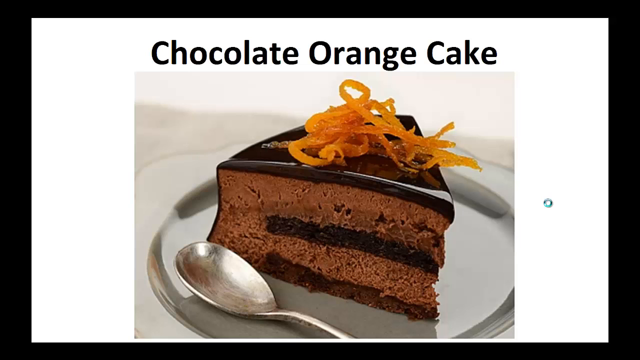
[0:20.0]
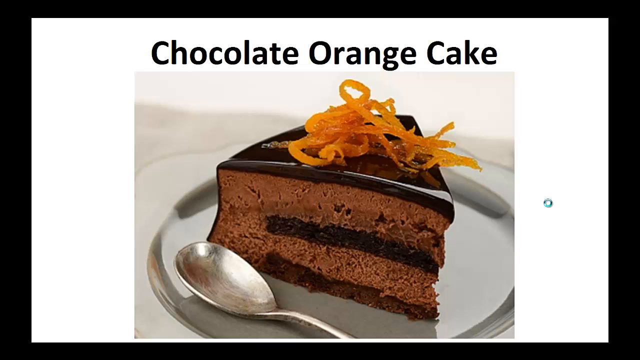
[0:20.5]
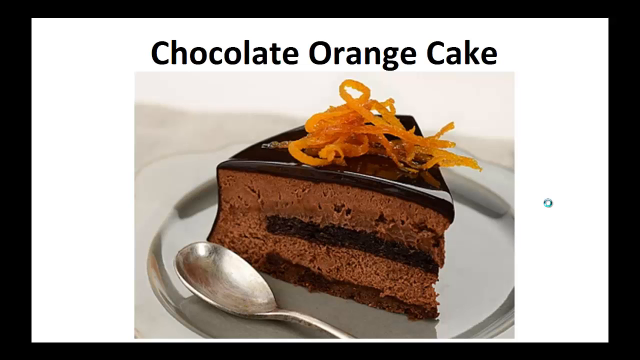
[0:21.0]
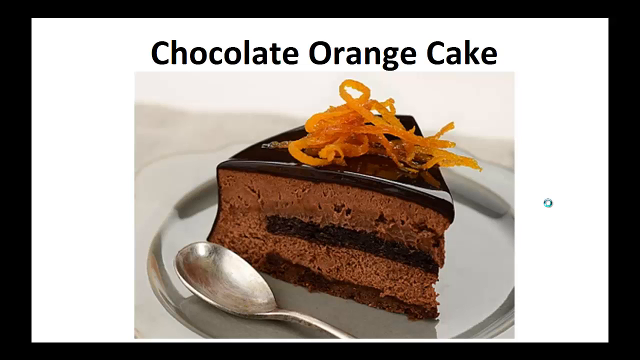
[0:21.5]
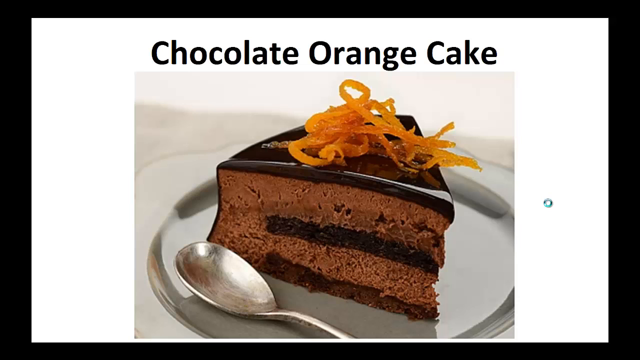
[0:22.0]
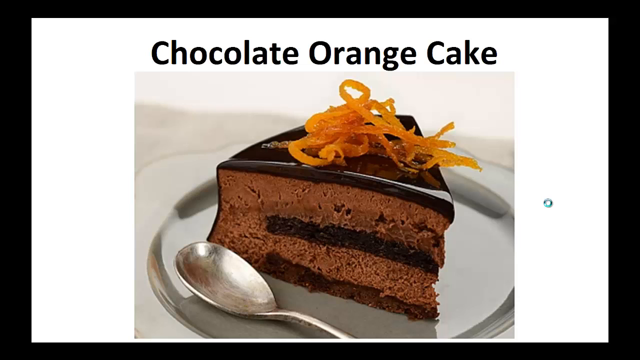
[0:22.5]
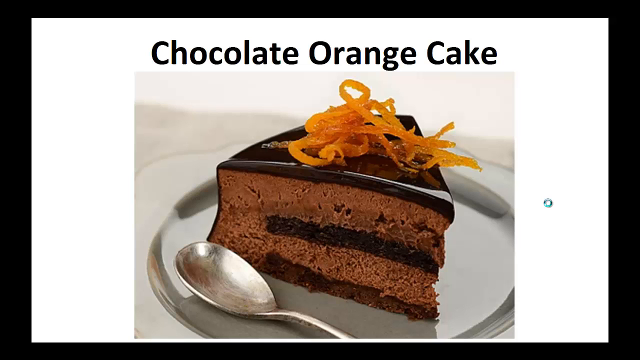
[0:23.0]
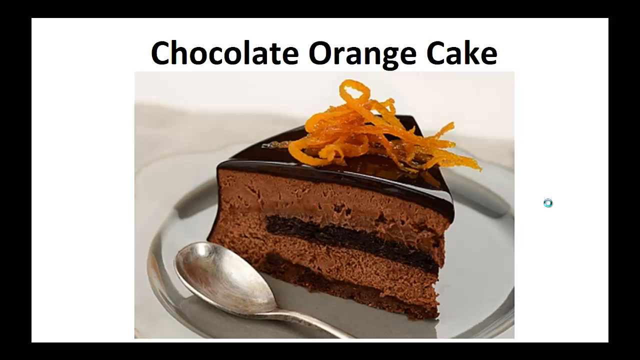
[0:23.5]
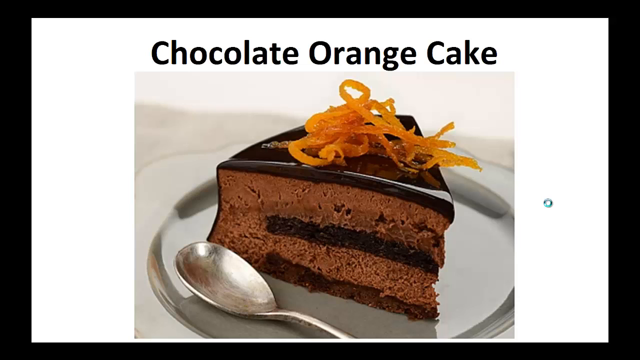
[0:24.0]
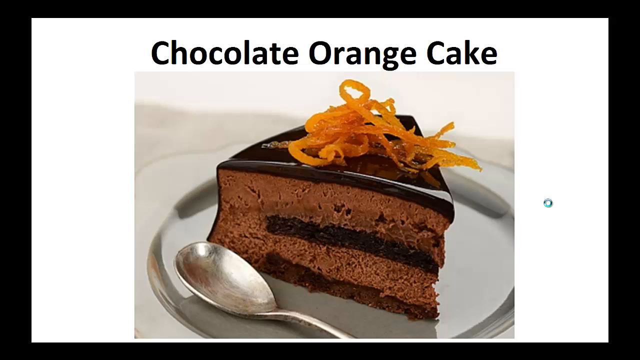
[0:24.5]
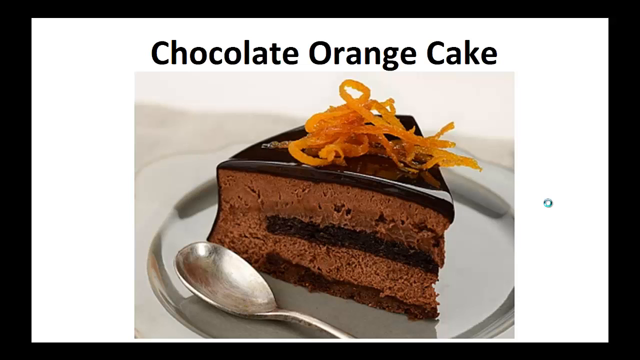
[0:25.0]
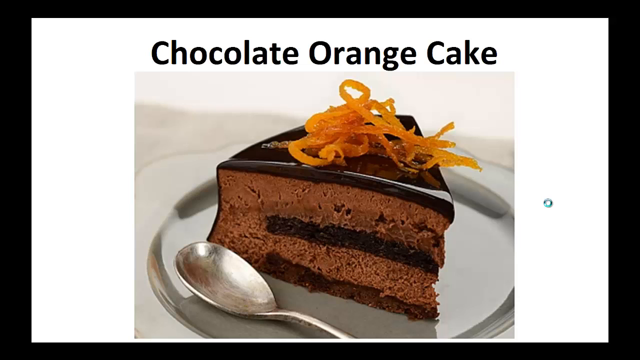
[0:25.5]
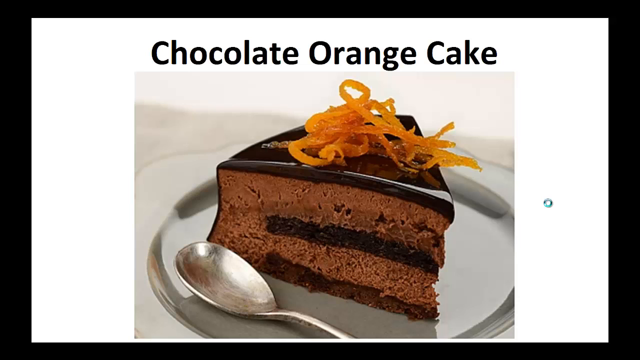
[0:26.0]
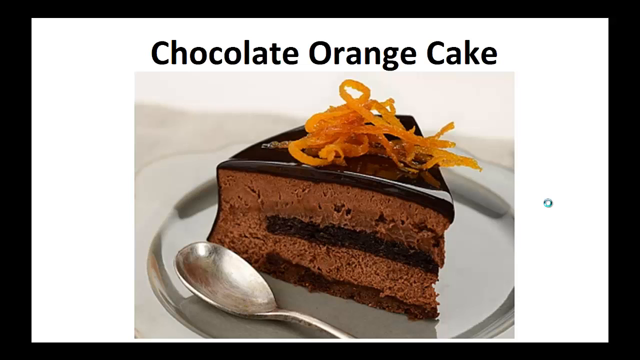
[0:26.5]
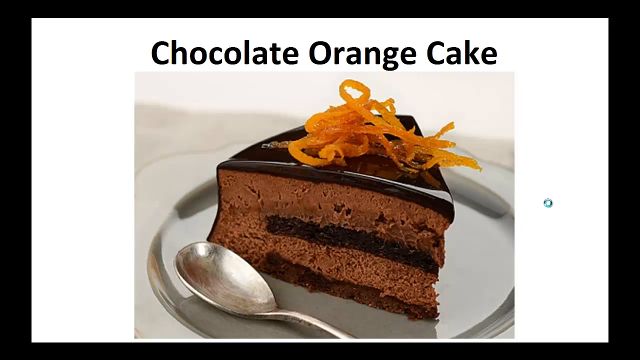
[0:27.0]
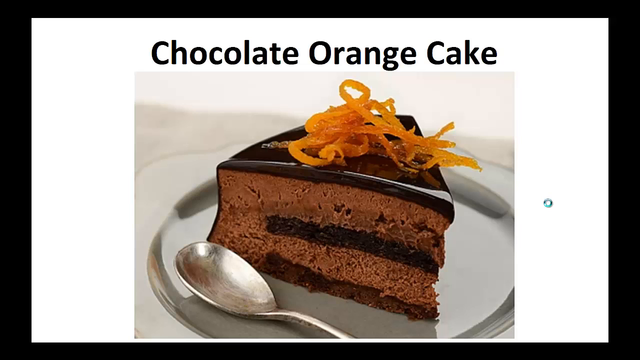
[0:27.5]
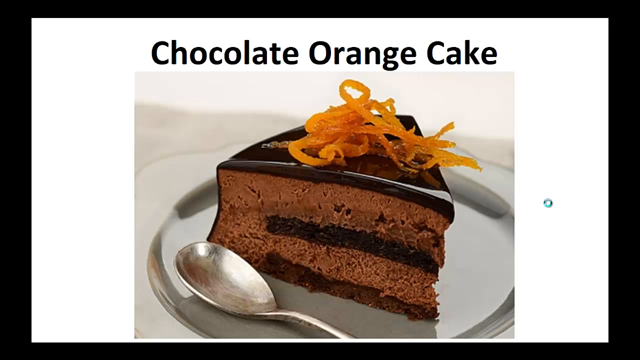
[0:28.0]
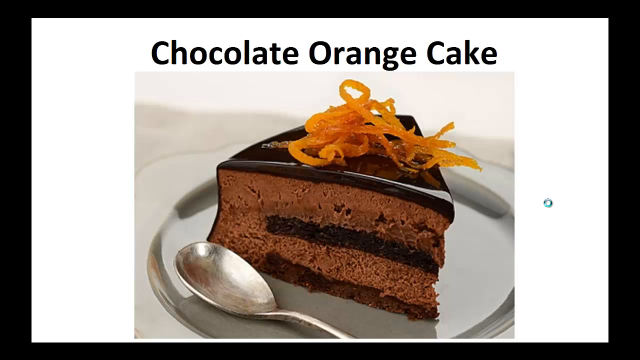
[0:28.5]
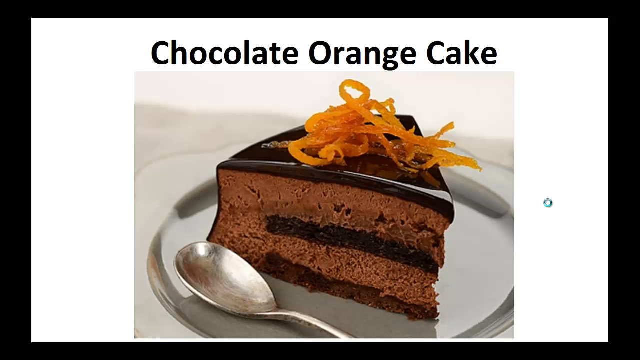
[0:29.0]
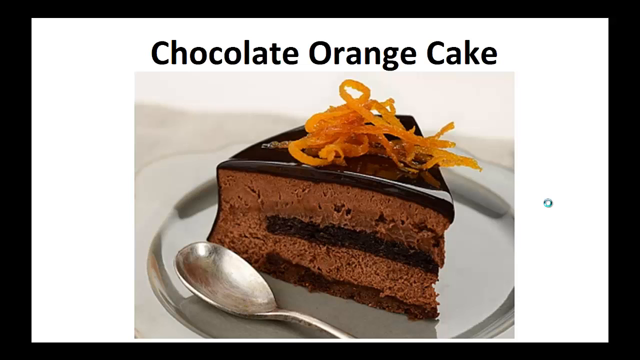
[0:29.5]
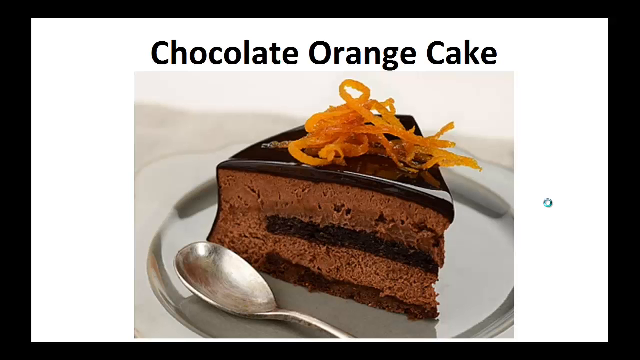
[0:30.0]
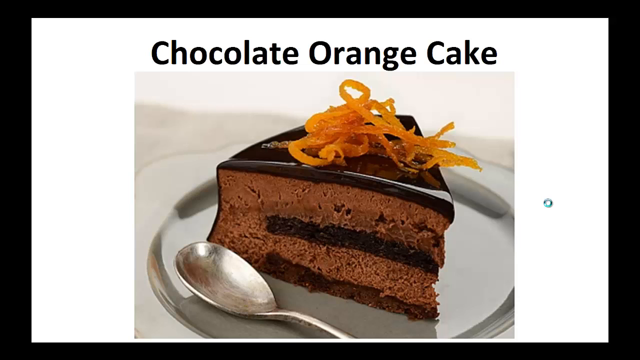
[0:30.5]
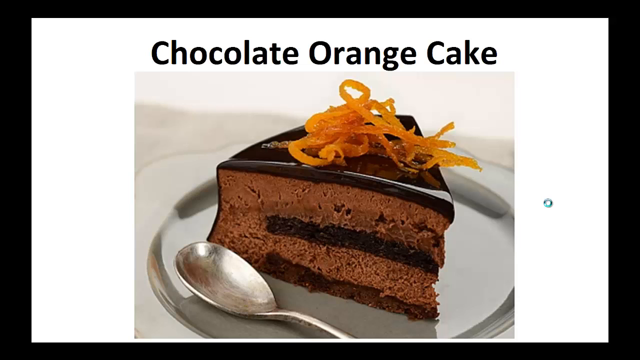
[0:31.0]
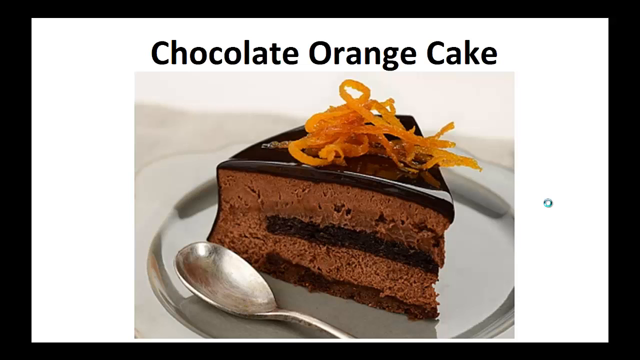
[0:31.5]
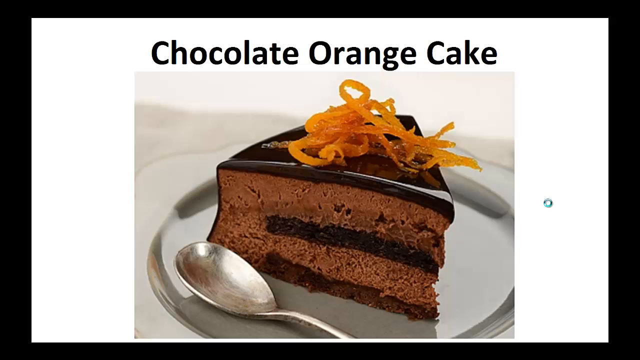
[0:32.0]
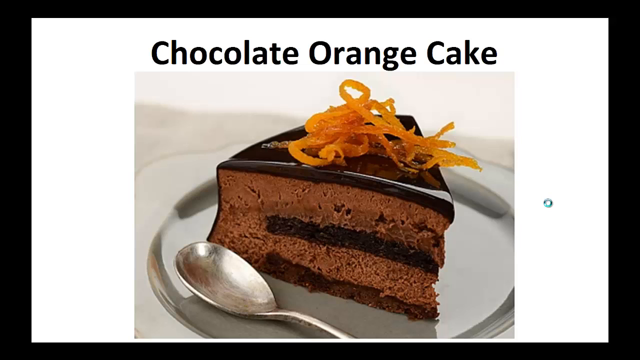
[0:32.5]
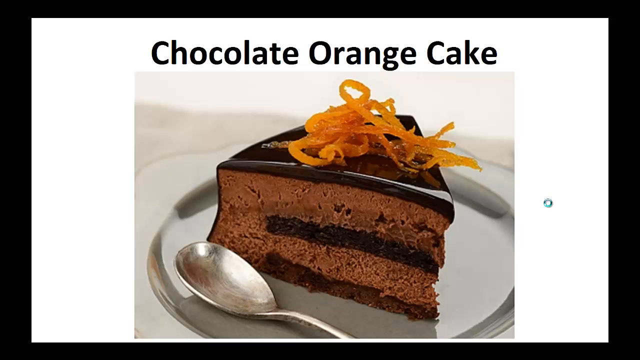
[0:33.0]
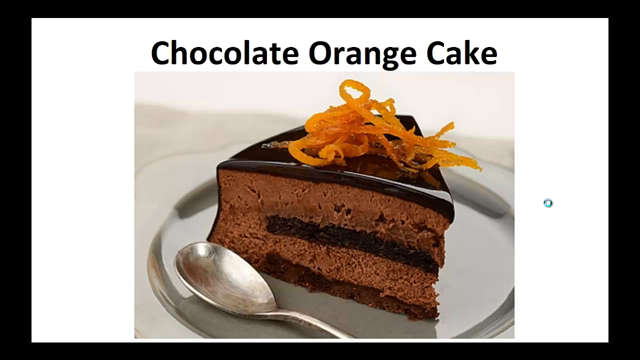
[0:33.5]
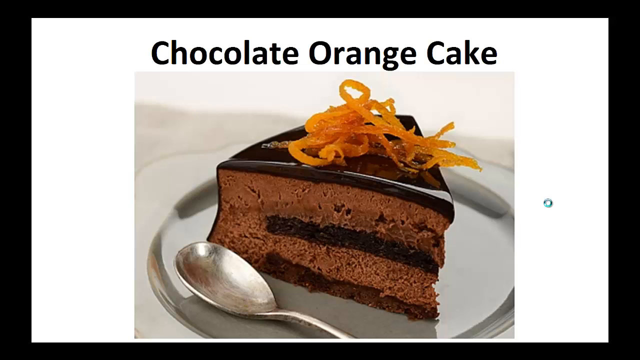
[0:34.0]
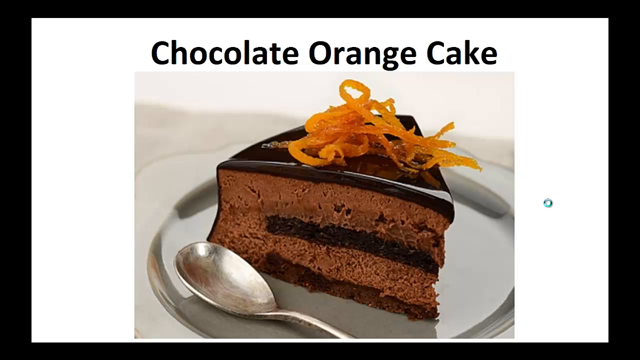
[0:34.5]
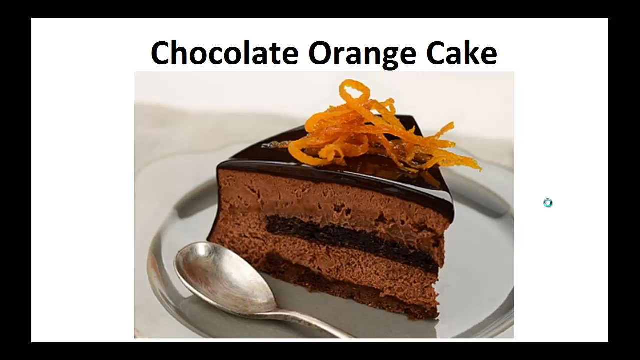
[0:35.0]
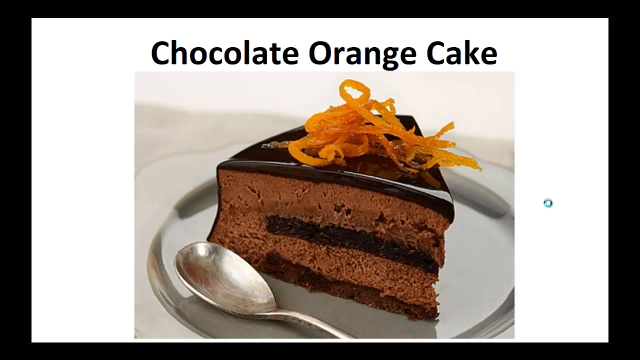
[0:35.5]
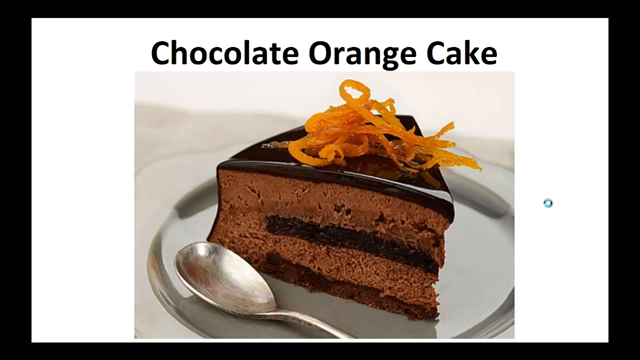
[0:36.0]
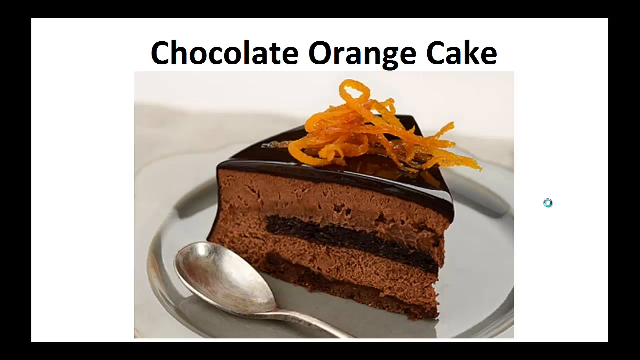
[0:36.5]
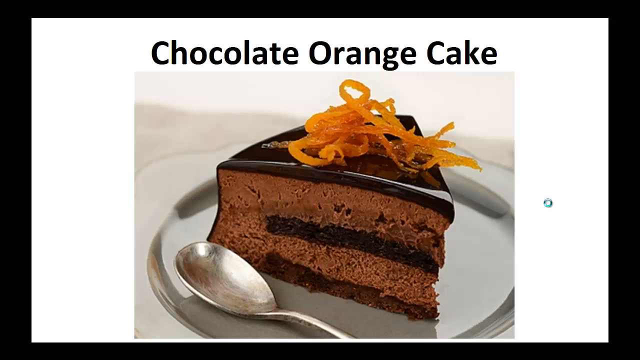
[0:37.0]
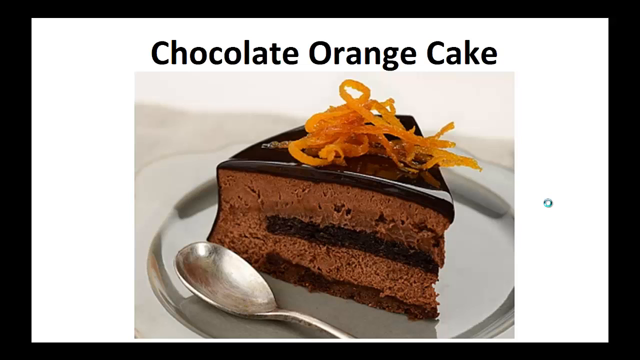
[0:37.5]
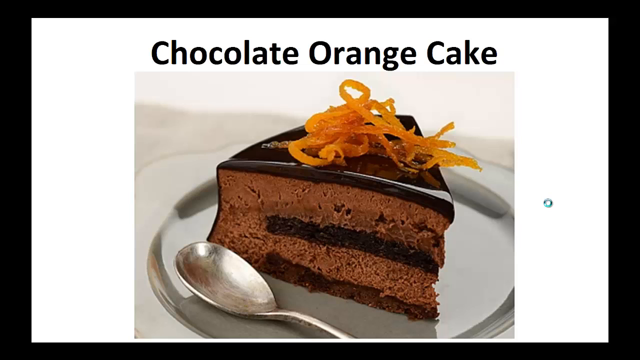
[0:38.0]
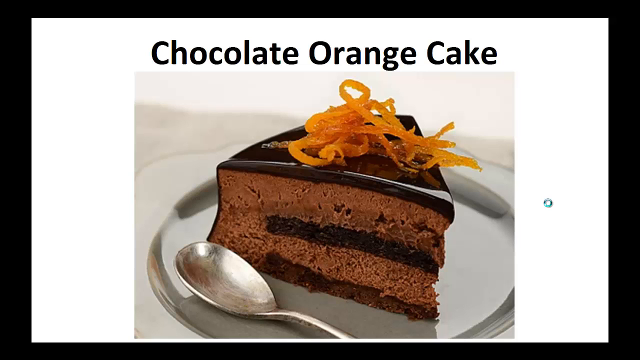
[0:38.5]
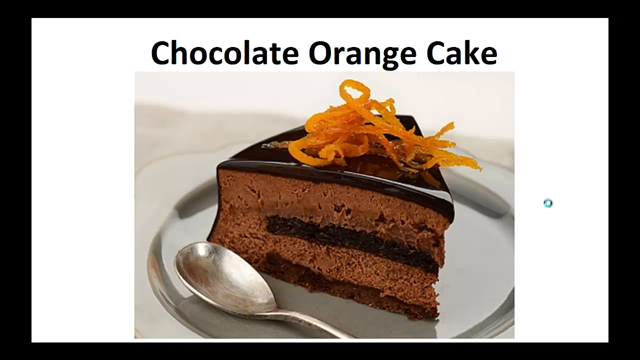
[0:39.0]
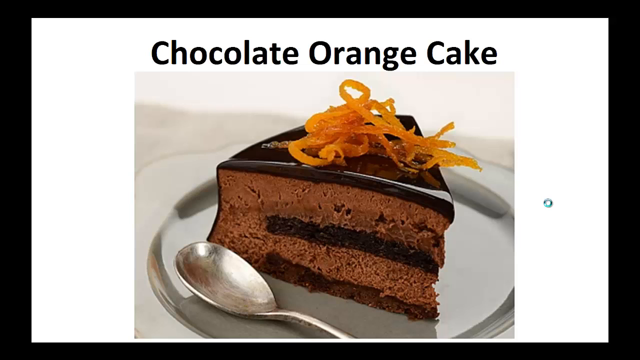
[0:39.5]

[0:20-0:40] The candied orange peel on top of the cake is in more than one length, a fairly substantial pile that forms a bow at the top. It has texture and layers, reaching probably half as deep as the cake itself, and spills over the sides, at least on one side of the cake, forming a decoration at the peak. Below the peel is a topping that appears at the front, at the tip of the cake towards the right side: an icing that appears to ooze slightly. It looks soft, gooey and unctuous.